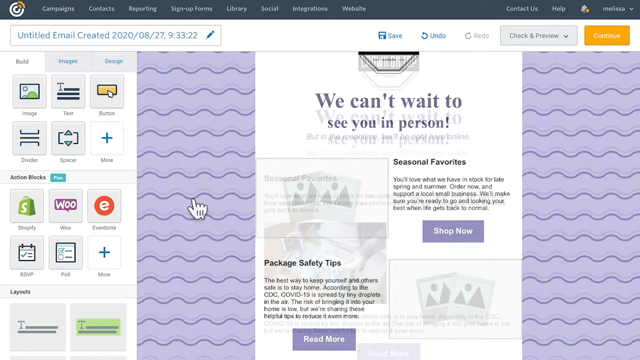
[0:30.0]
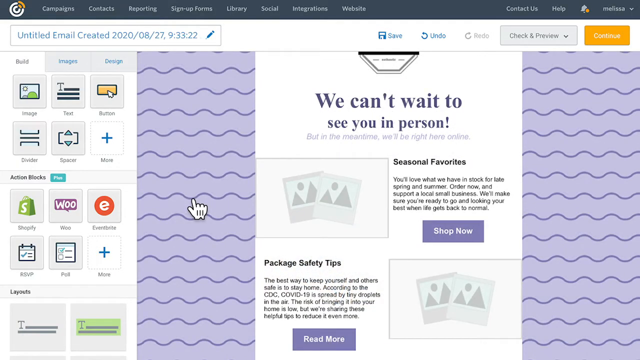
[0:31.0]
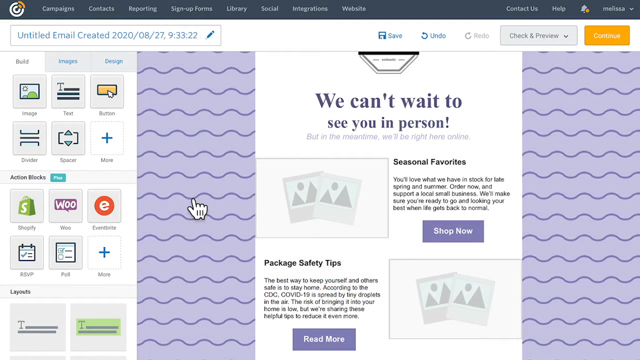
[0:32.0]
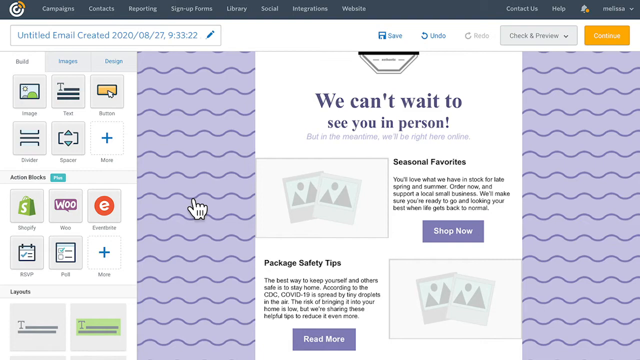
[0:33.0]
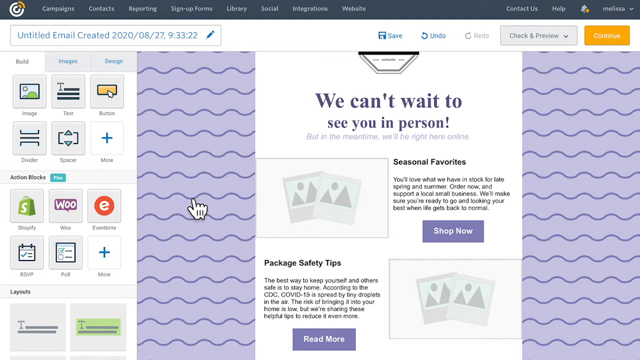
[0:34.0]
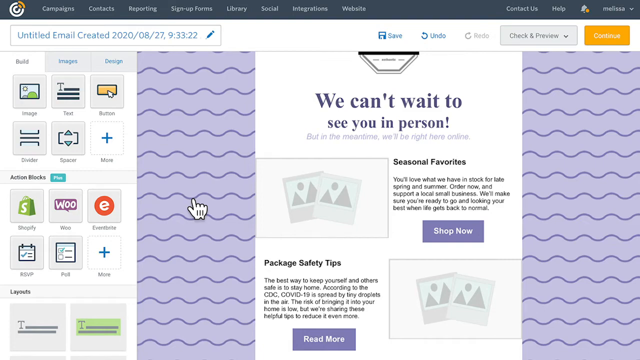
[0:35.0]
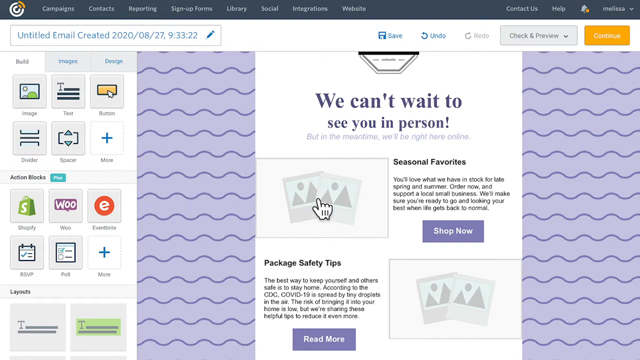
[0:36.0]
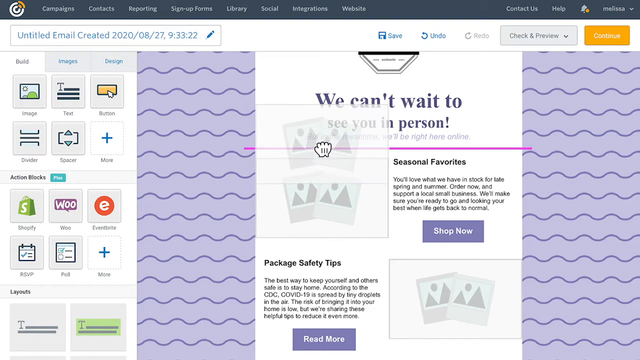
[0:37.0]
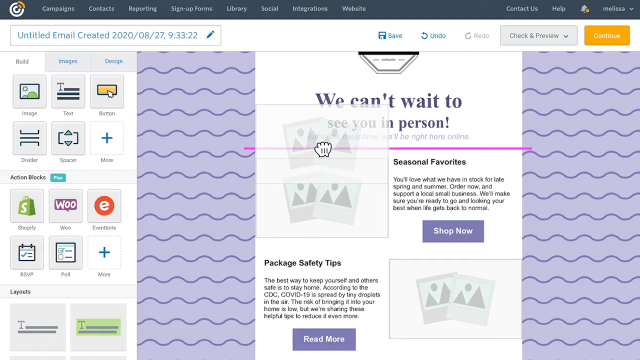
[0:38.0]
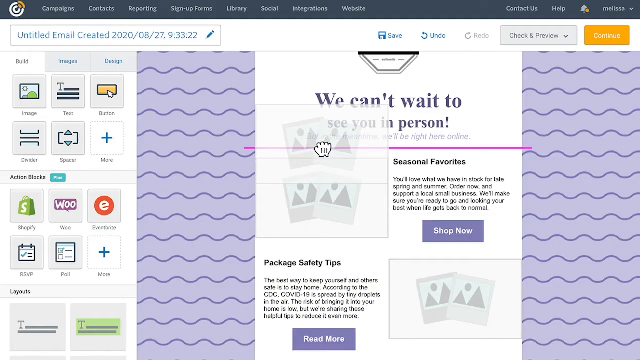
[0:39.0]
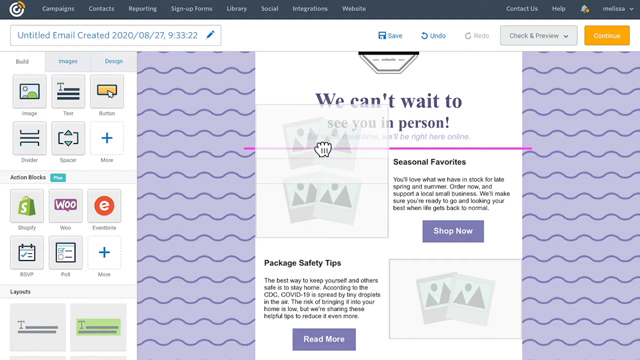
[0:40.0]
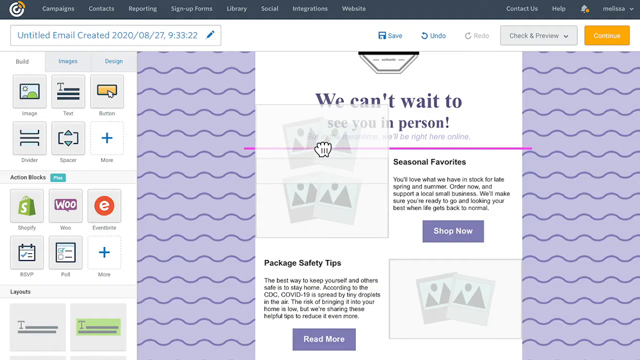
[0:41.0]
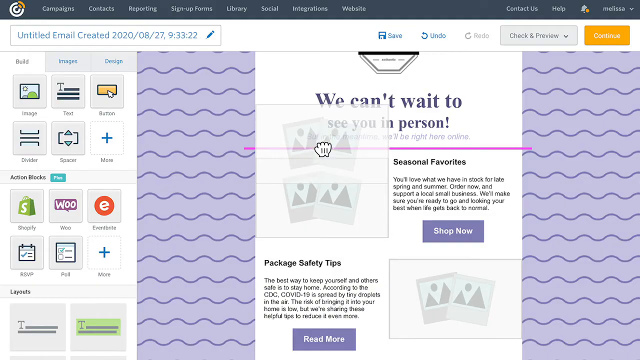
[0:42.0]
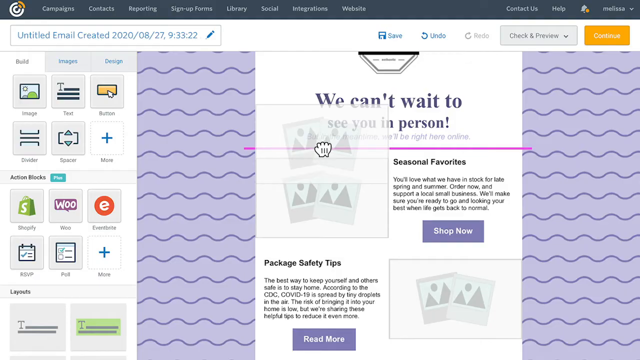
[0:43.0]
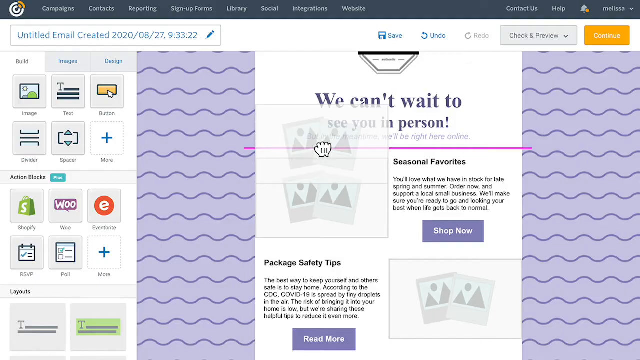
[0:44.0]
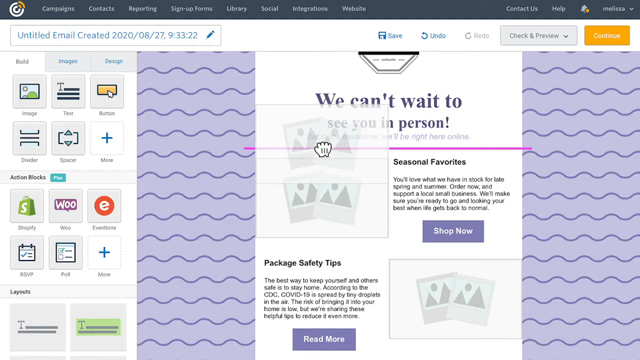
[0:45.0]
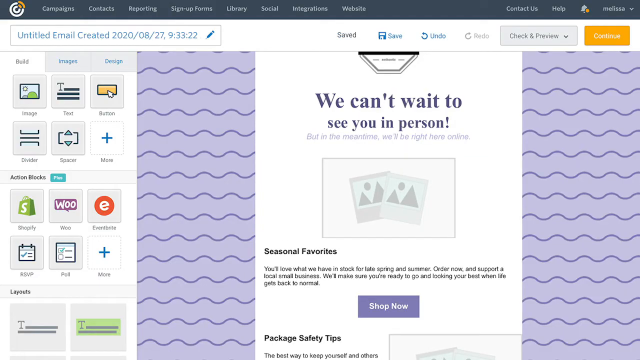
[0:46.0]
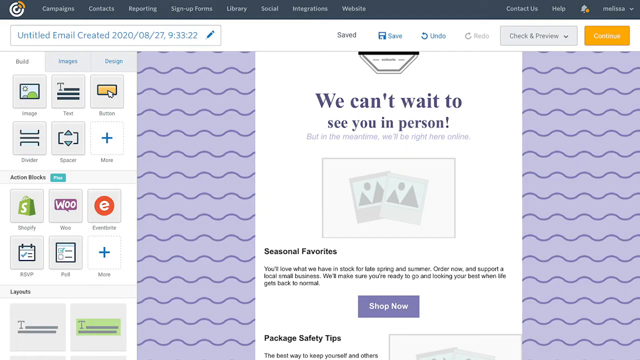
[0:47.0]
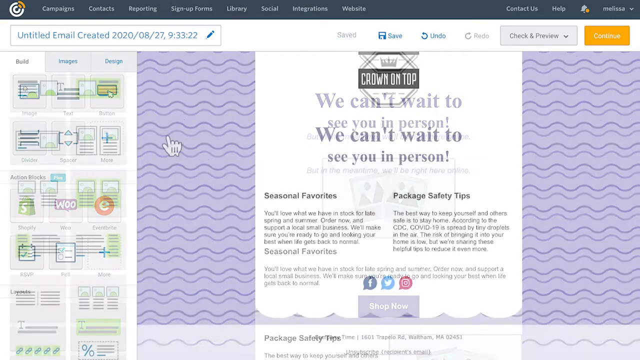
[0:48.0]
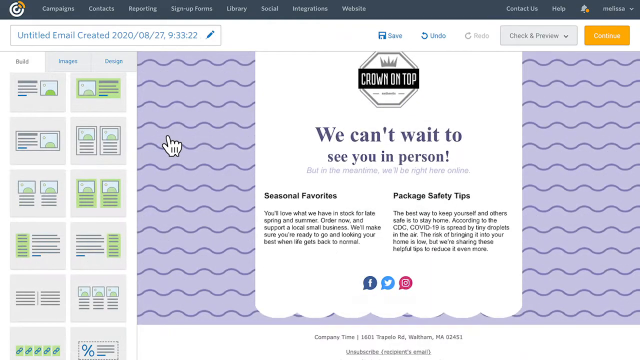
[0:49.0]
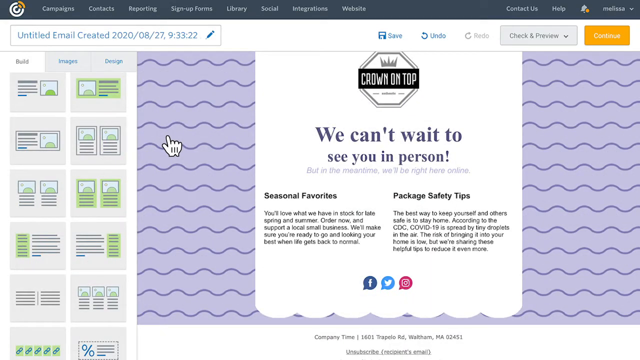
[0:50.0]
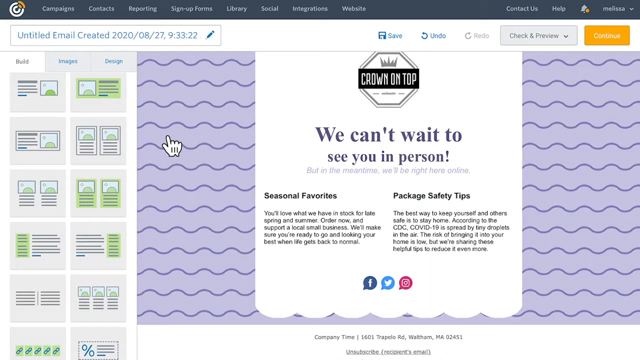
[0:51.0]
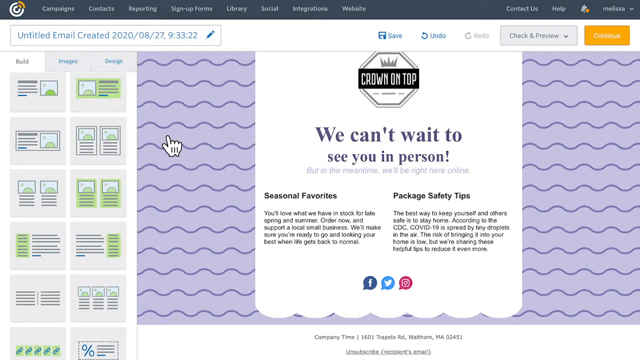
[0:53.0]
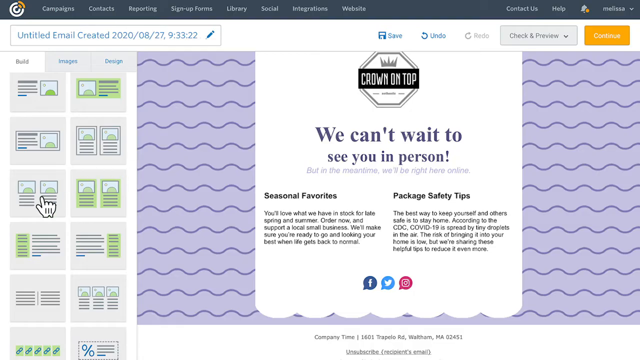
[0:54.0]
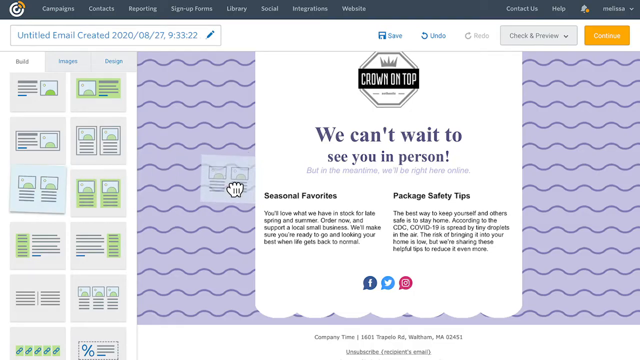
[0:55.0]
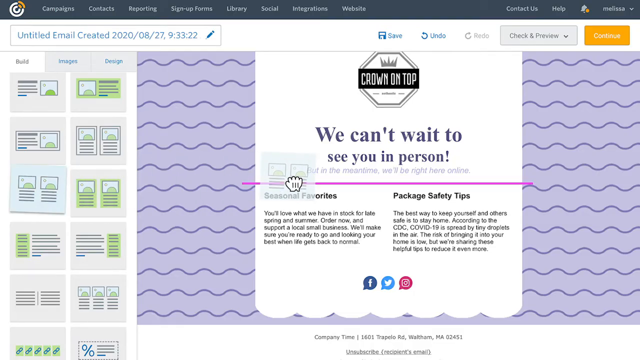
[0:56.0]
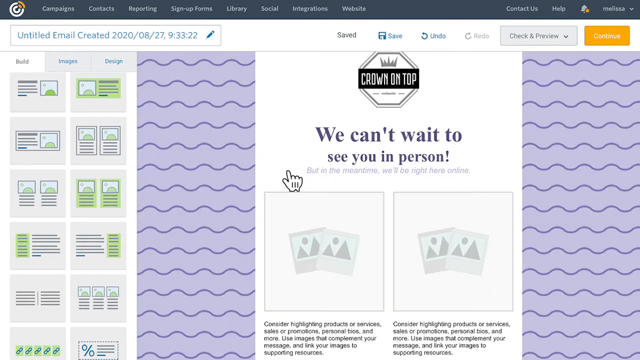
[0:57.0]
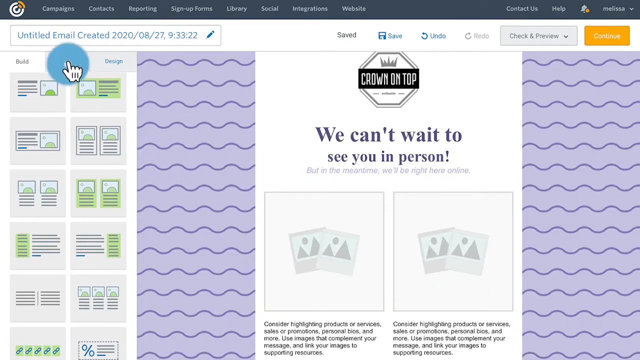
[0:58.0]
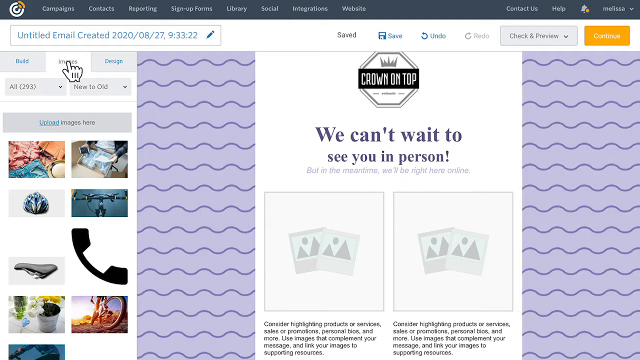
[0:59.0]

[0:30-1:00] The video appears to be showing how to organize and set up the email. Beside the Seasonal Favorites section there is now a generic placeholder image, and a huge mouse cursor clicks the placeholder and drags it up above the Seasonal Favorites text, with a bright pink line marking the spot. Once it is moved, the Seasonal Favorites text automatically moves down and takes up the rest of the space. Next, a version of the email without any images appears, with the Seasonal Favorites and Package Safety Tips copy side by side. On the left-hand side of the screen is an option for image layouts; one is dragged over, and the bright fuchsia line appears. Two images now correspond to the columns, with Package Safety Tips in one column and Seasonal Favorites in the other.